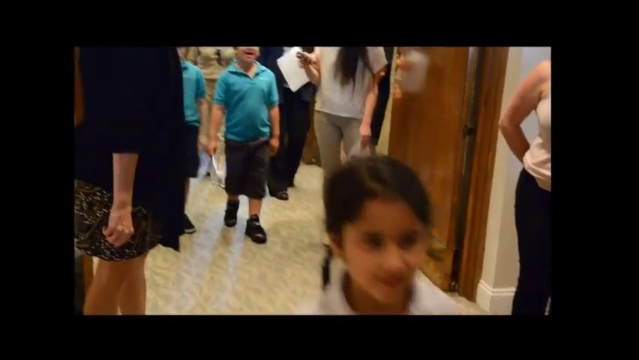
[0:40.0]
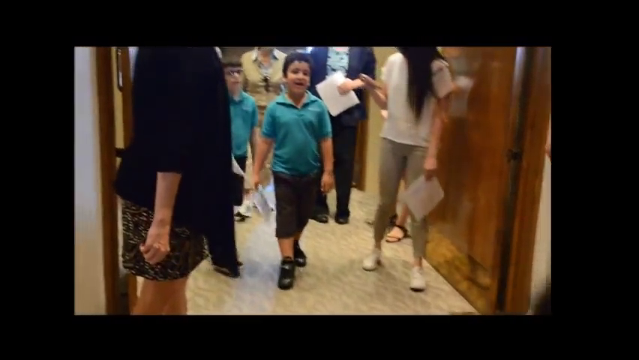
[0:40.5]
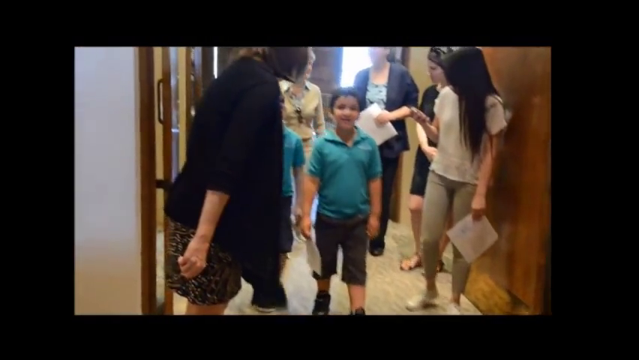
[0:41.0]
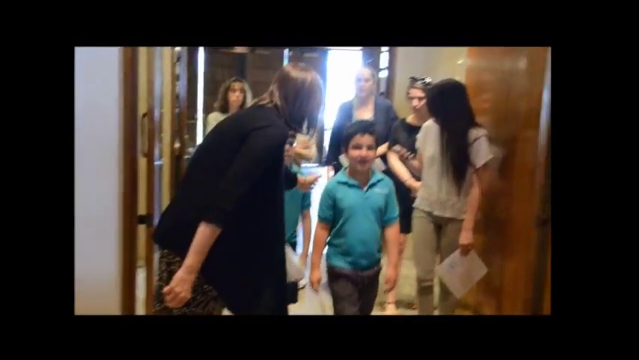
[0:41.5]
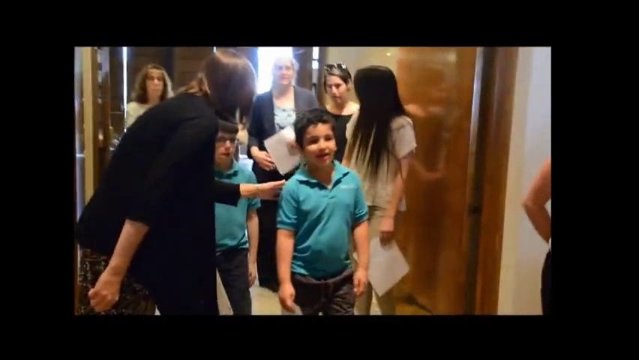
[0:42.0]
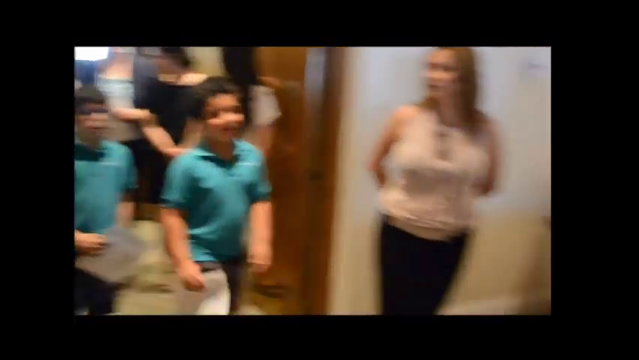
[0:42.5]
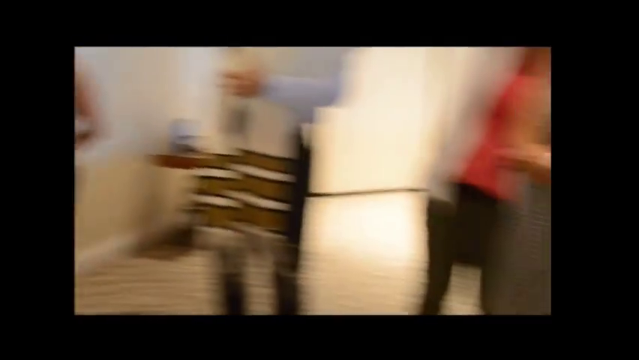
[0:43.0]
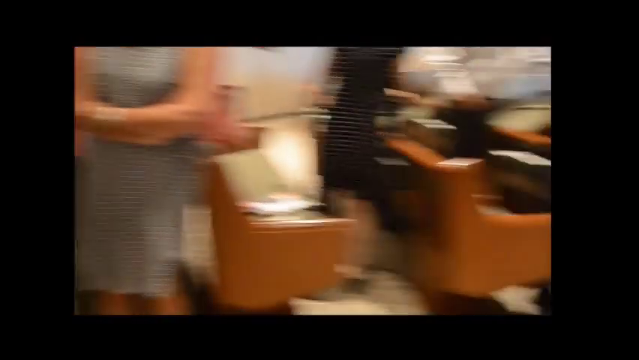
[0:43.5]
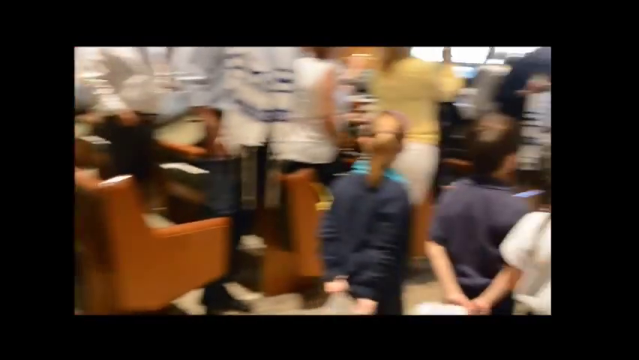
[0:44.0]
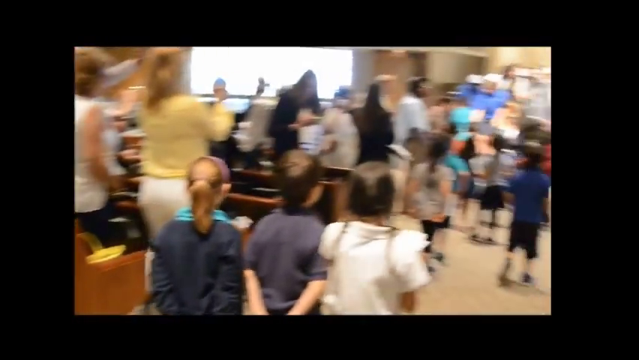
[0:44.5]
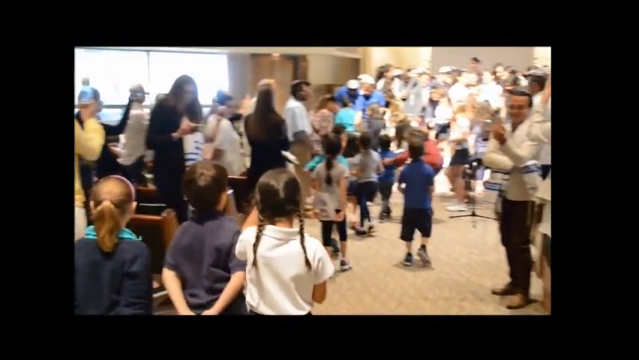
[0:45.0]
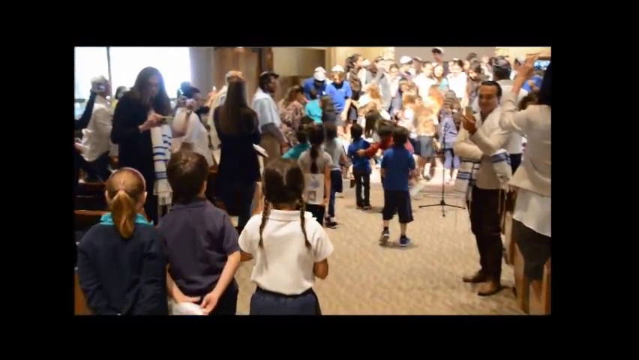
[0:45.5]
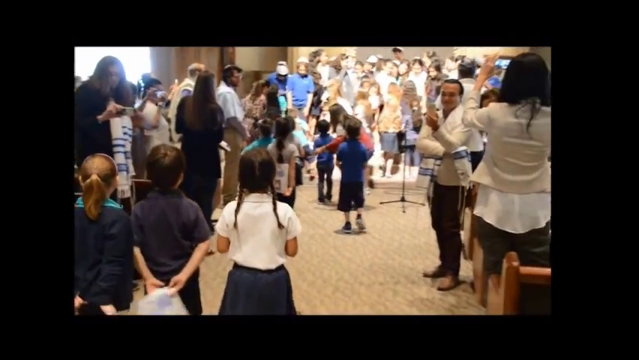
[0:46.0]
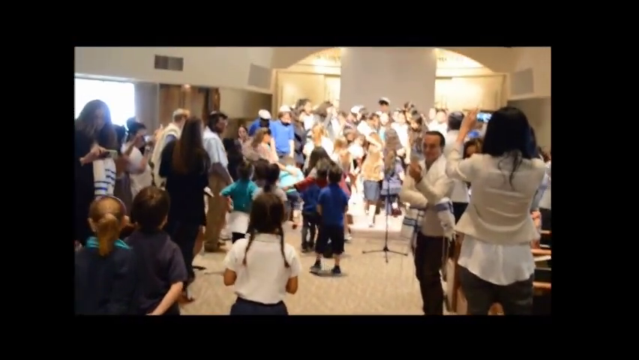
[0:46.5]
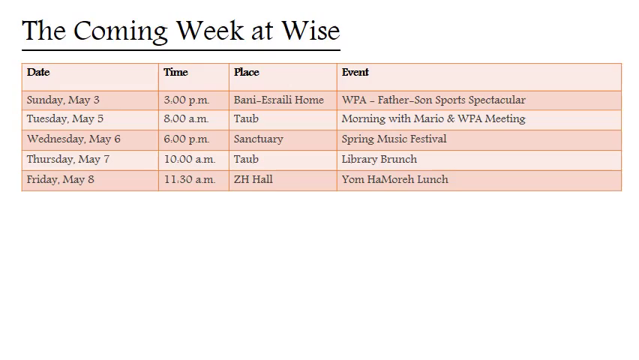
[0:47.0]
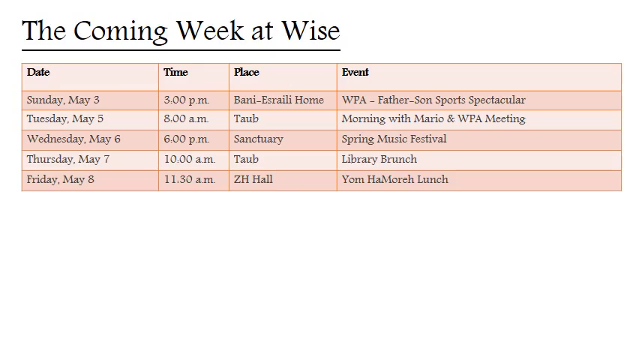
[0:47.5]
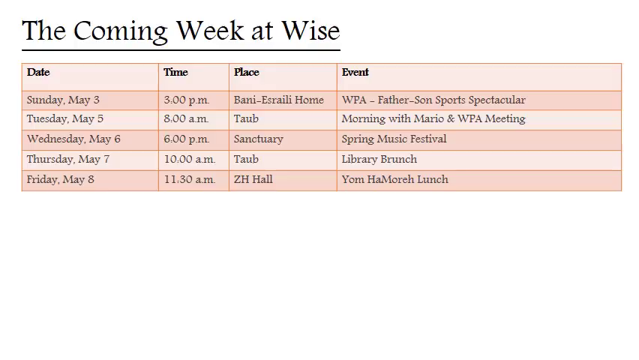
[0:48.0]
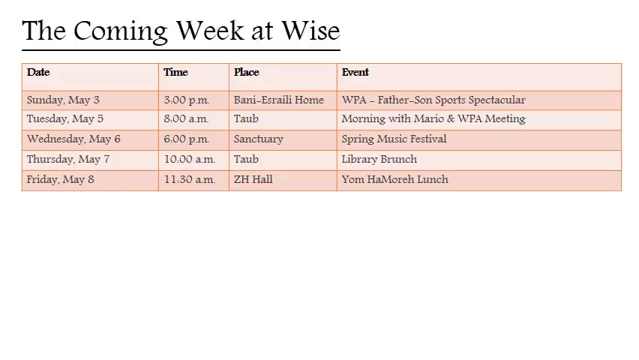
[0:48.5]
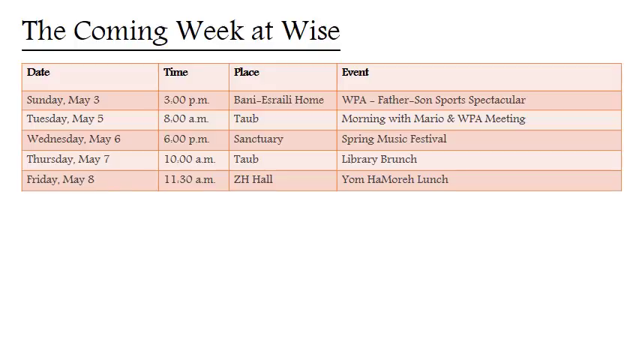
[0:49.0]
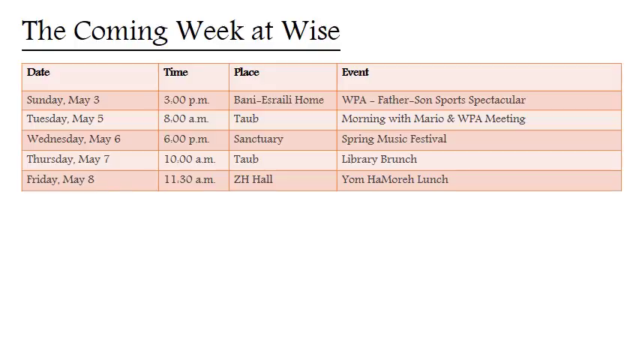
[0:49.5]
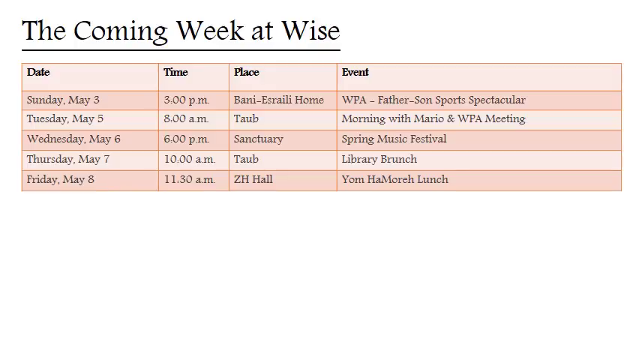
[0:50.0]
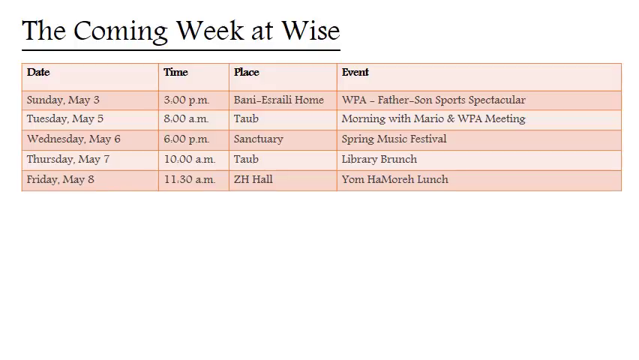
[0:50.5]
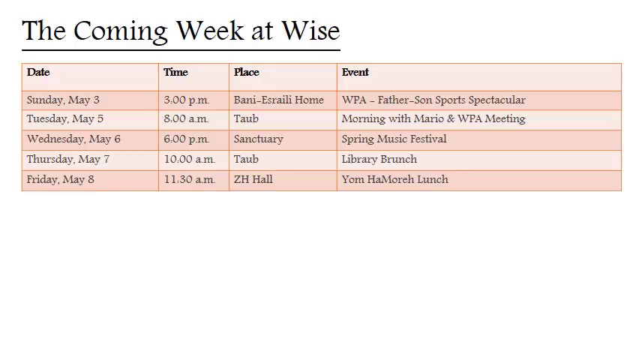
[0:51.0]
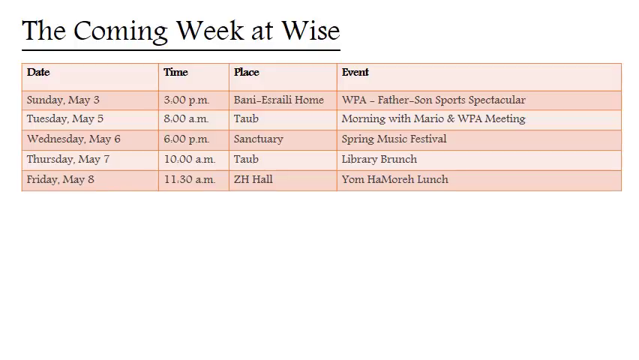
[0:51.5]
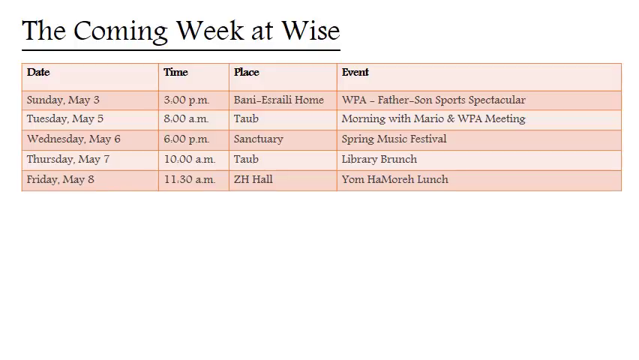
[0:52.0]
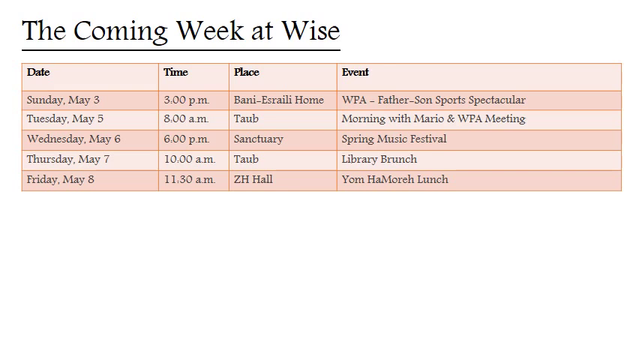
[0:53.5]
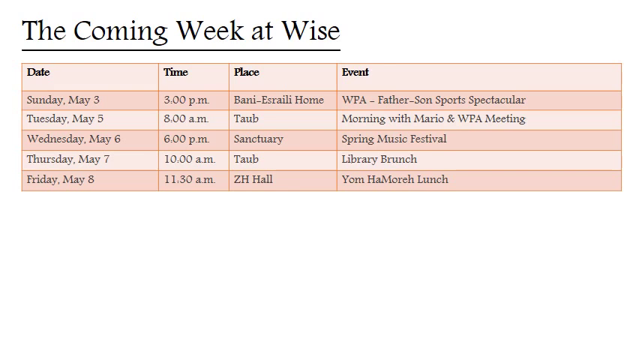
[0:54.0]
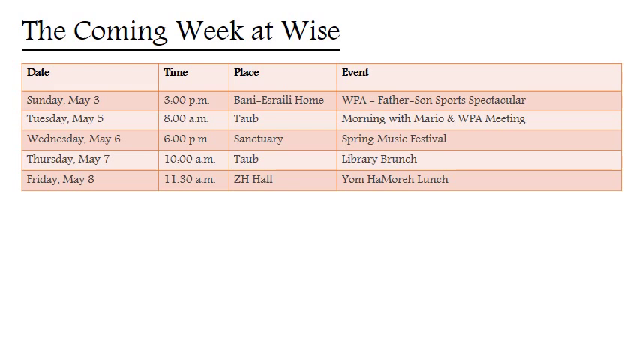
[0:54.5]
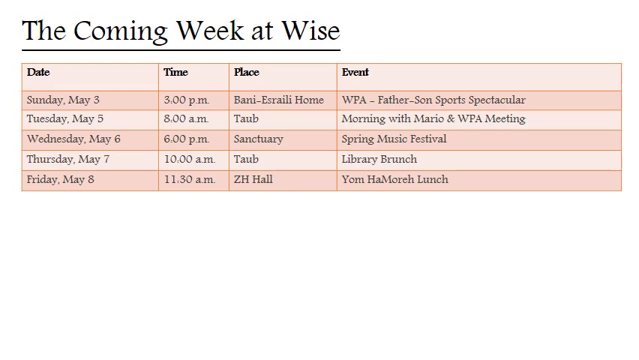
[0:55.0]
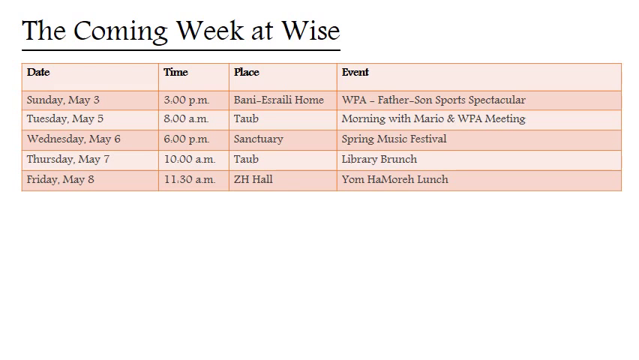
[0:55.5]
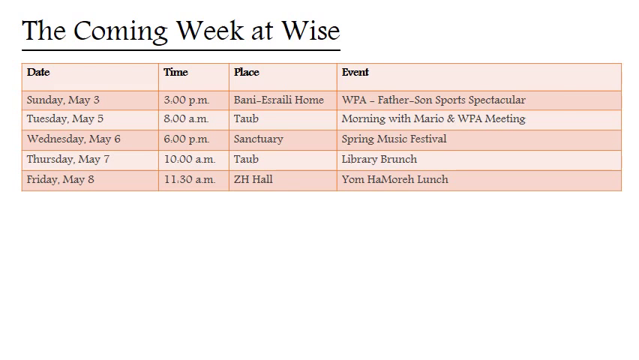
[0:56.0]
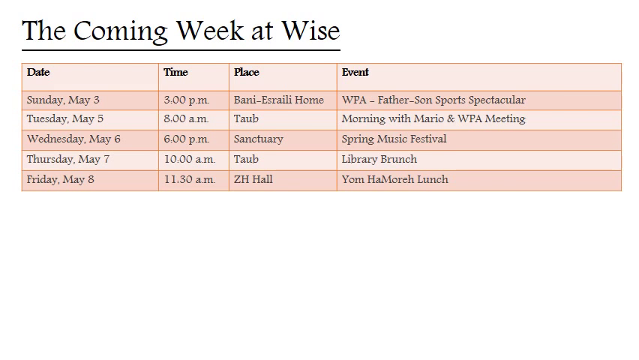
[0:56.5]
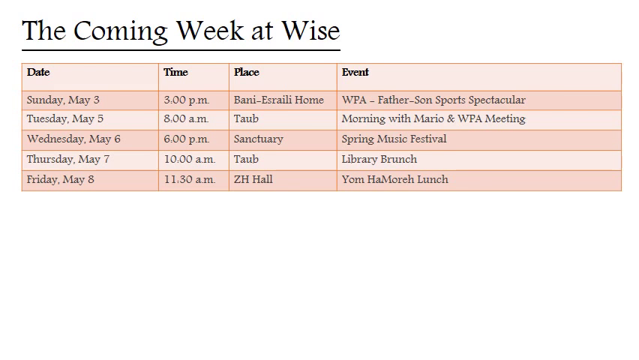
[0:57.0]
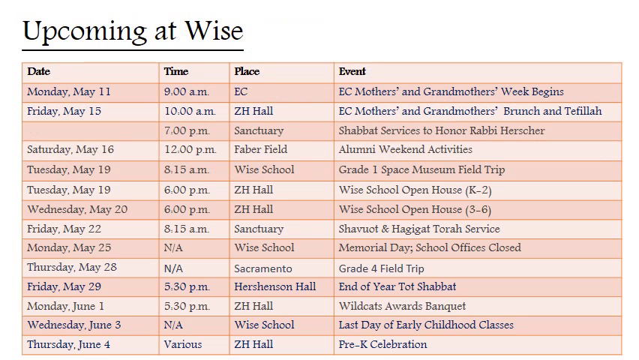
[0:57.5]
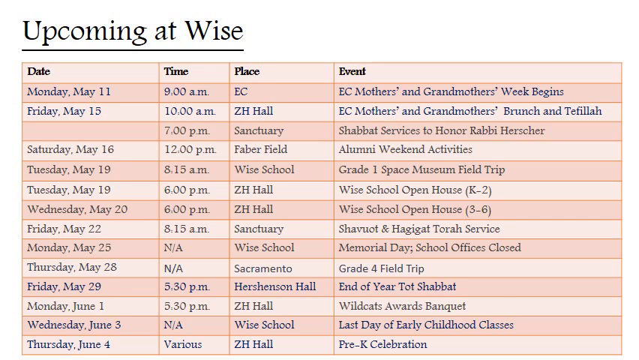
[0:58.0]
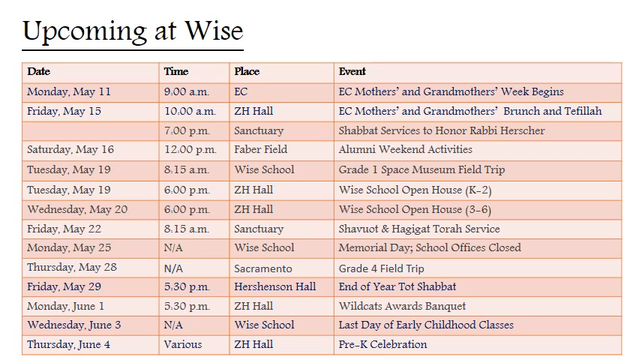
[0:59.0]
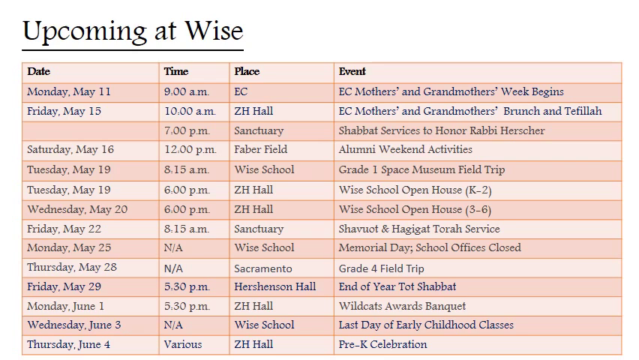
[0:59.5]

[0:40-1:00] The footage starts letterboxed on all four edges. In the center, children walk in through wooden double doors that open away from the camera. An adult is in front of each door: on the right a woman in a white short-sleeved shirt and tan pants, and on the left an older woman in a black three-quarter-sleeve pullover and leopard-patterned pants. The children, in teal polos, walk from the upper left toward the lower right; the first two are boys who seem to wear khaki pants. The camera then pans to the right and around, showing children who have already walked in and who appear to be heading toward the stage, where they are lined up. The video then cuts to a static image with a white background. At the top, underlined black letters read "the coming week at Wise." Below is a small chart with the columns date, time, place, and event.